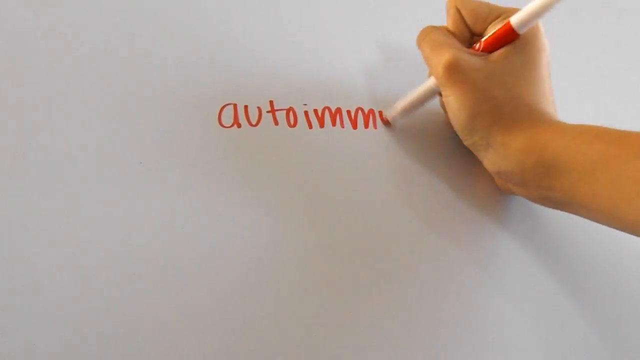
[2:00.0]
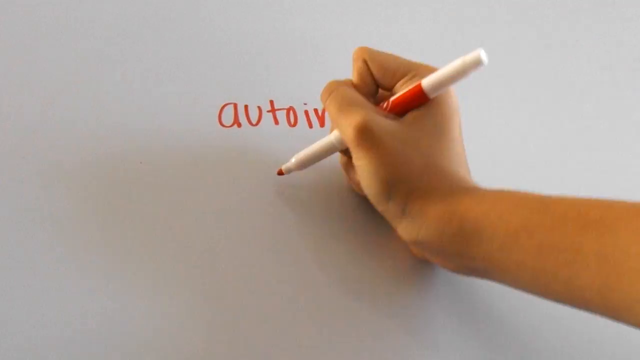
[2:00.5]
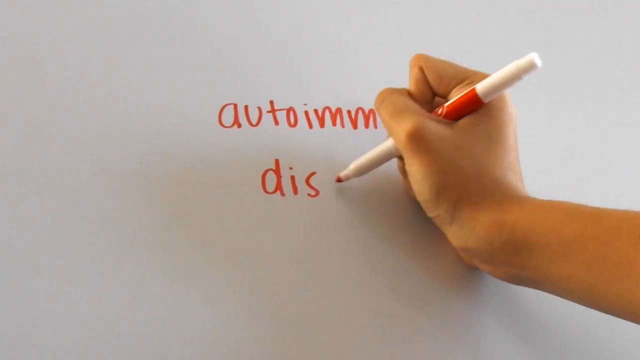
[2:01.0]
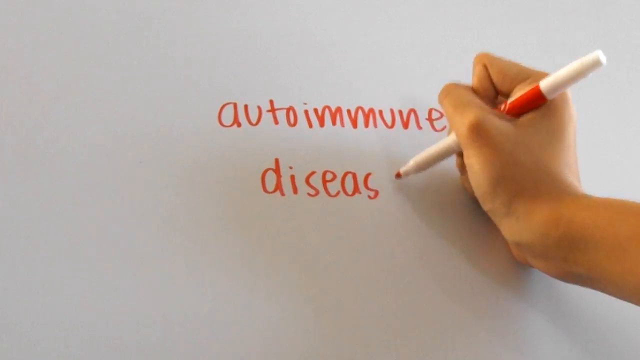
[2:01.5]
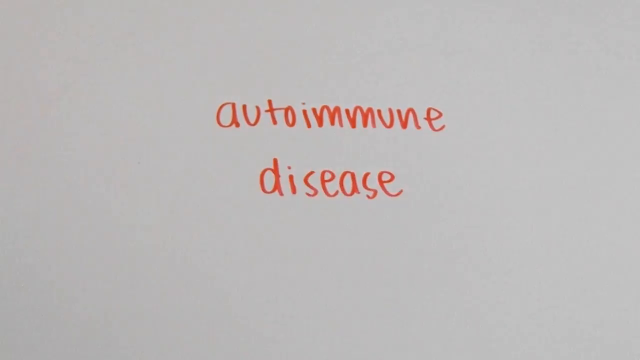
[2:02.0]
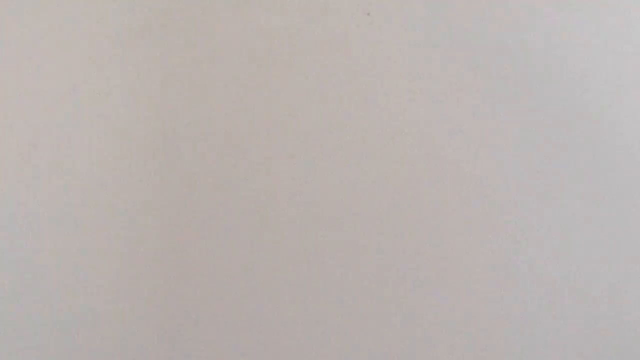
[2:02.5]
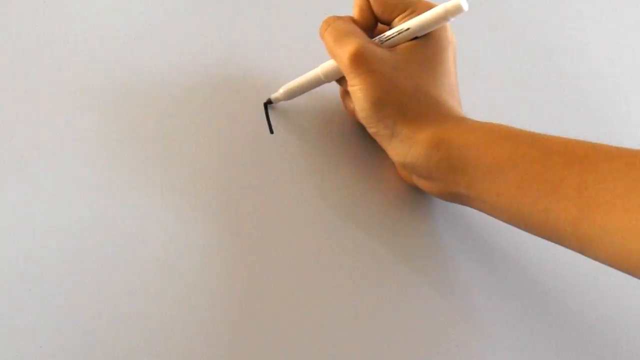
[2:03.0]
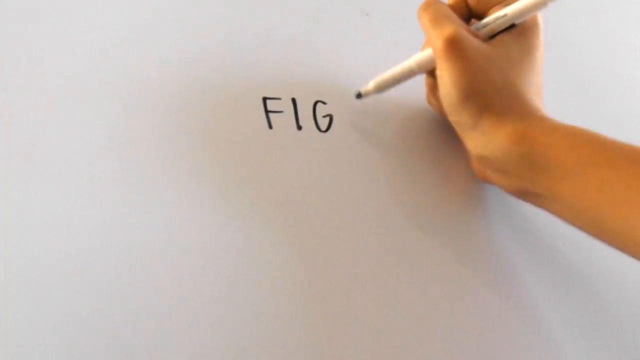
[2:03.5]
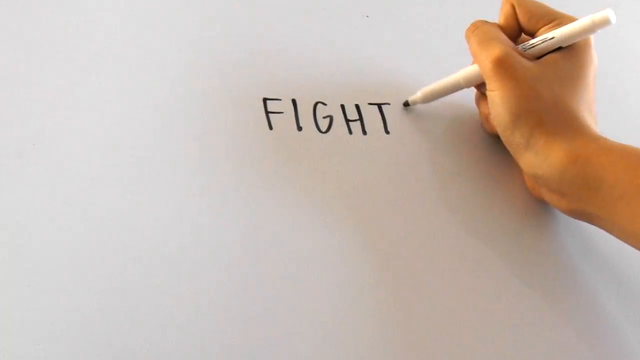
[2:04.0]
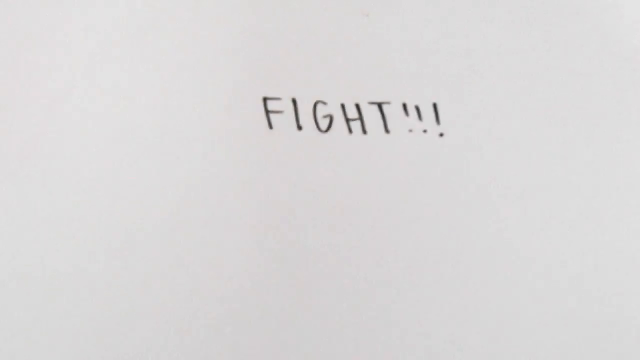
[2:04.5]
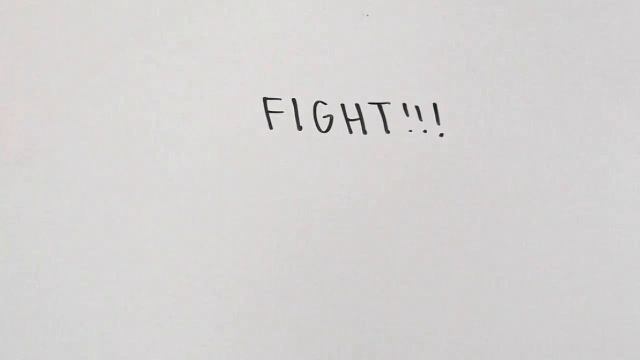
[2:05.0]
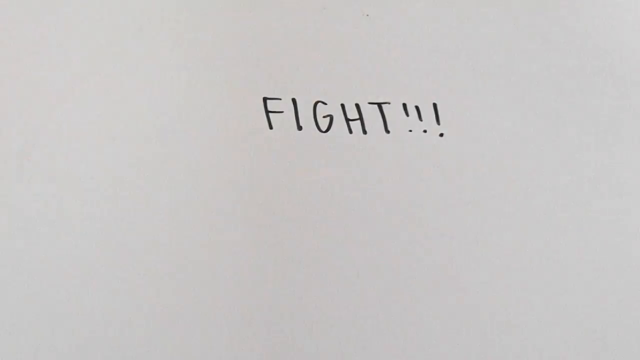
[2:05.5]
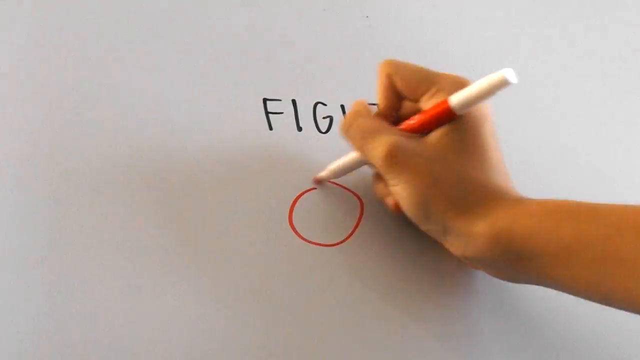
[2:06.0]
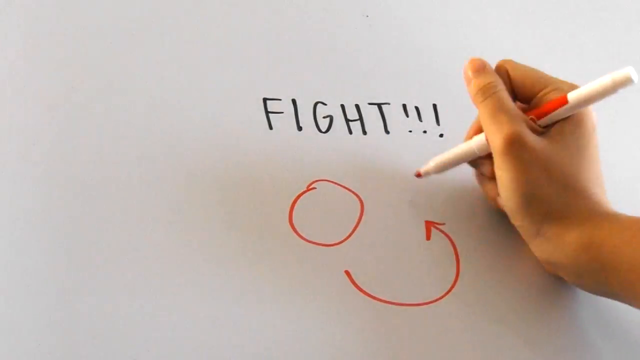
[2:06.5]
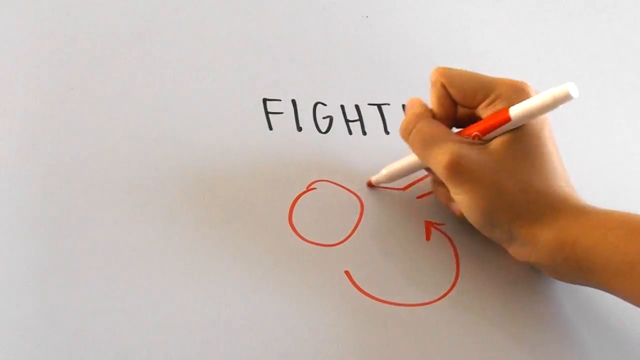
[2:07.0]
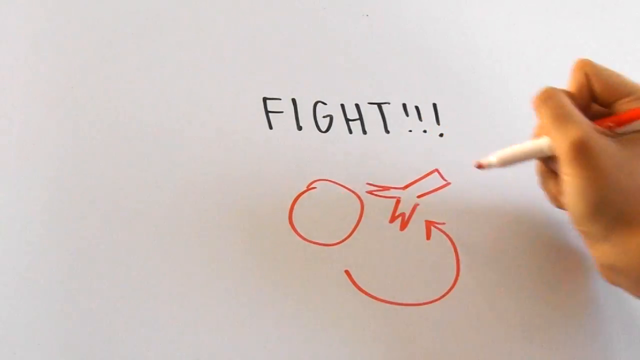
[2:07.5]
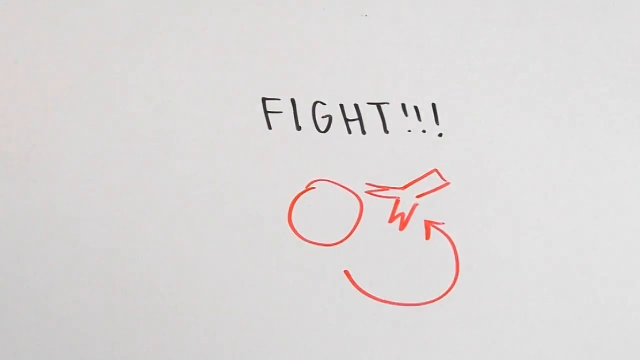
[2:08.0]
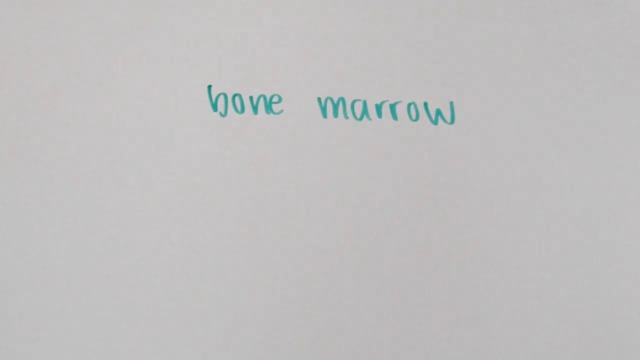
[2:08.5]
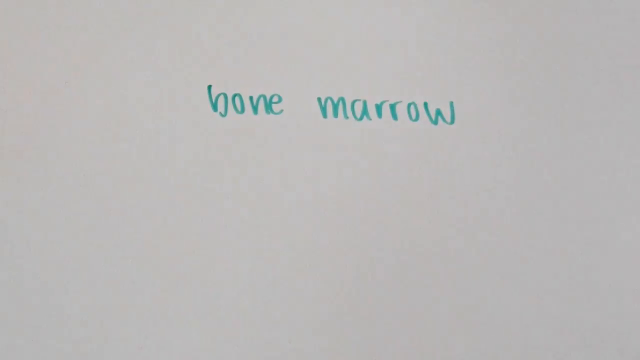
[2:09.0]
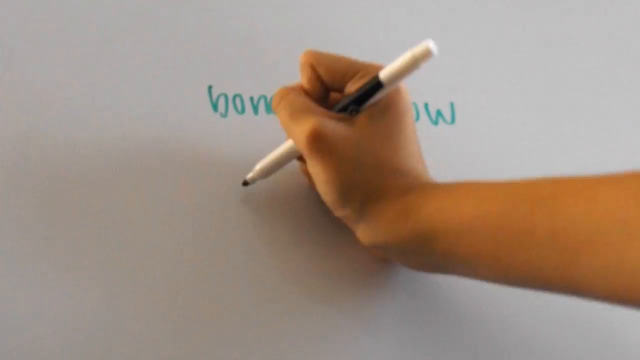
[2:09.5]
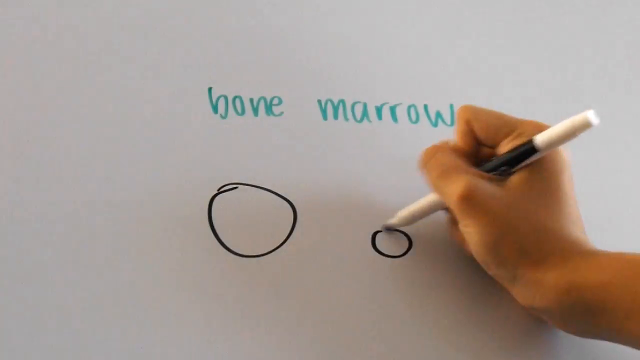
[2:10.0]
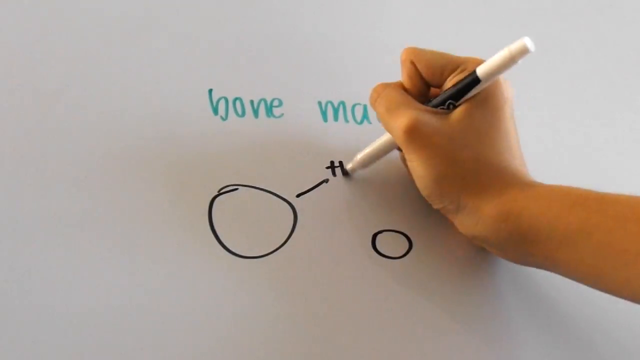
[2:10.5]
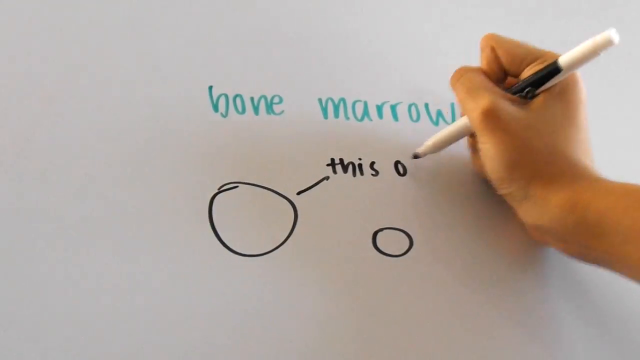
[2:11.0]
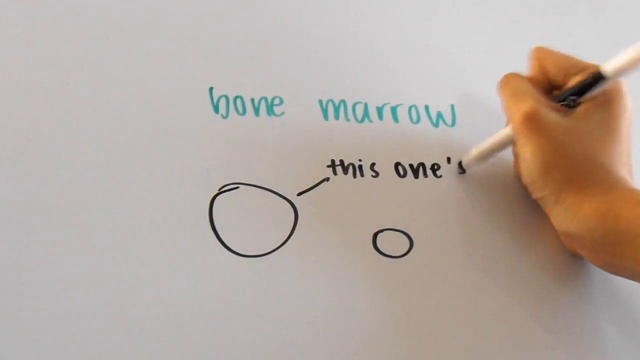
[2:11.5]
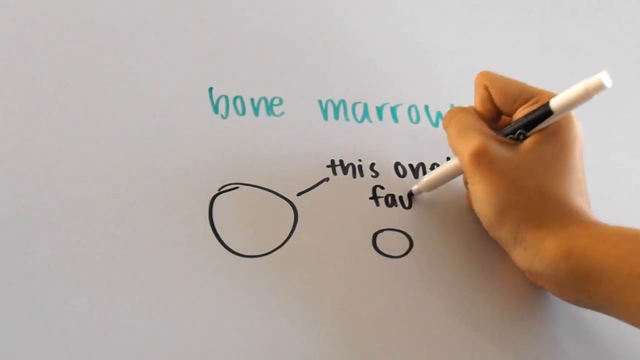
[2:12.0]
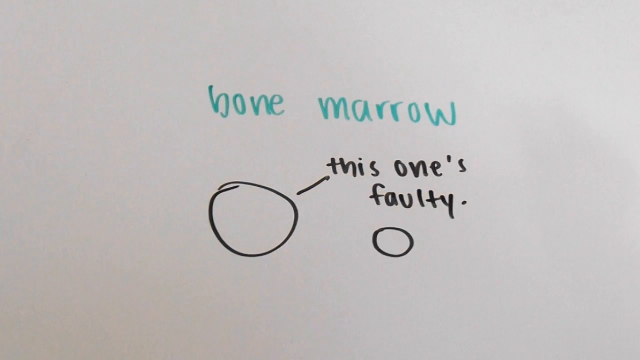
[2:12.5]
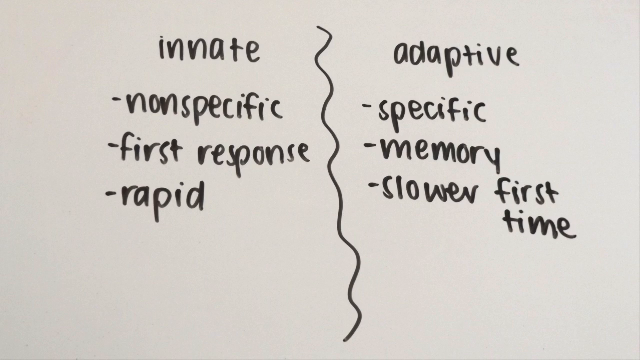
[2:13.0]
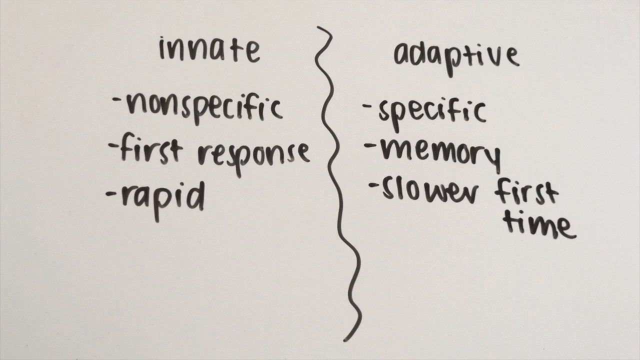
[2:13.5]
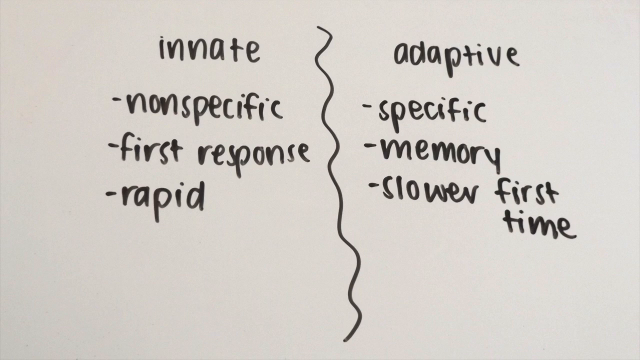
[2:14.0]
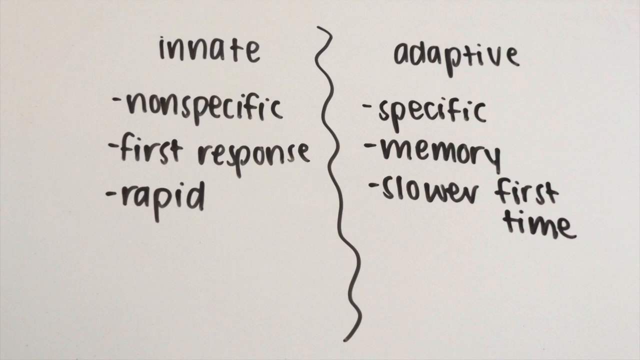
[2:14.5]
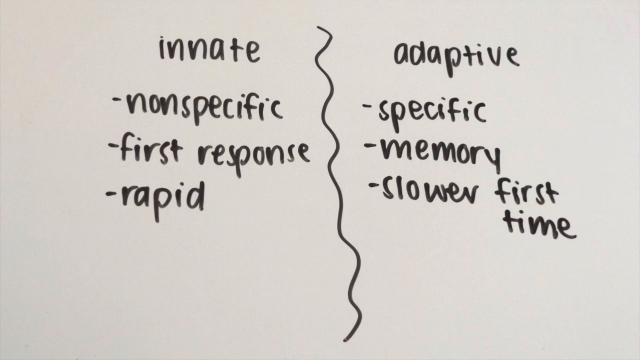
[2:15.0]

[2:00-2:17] The hand comes into the image on the far right side in the middle, showing the front part of the wrist, with the pen held in a fist grip. It writes in red on the white surface "autoimmune" on the first line and "disease" on the second line below it. The hand then comes in with a black marker again and writes "fight" in all-caps black letters followed by three exclamation marks. It draws a red circle underneath, with a space, below the letters I, G and H, then draws a rounded half-circle arrow that starts below the bottom right of the circle and goes around and up to where it draws a small shape that looks like a ribbon split in two with two ends. The board then shows "bone marrow" in light blue. The hand draws a big black circle below the word "bone" with a little stripe at the circle's top right and writes "this one's faulty". To the right of the big circle is a smaller circle. The shot cuts away to a squiggly black line running vertically down the middle of the screen. On the left side, at the top, is written "innate", then below it dash "non-specific", dash "first response", and "rapid". On the right side of the squiggly line is "adaptive", with dash "specific", dash "memory", and dash "slower first time" written below.